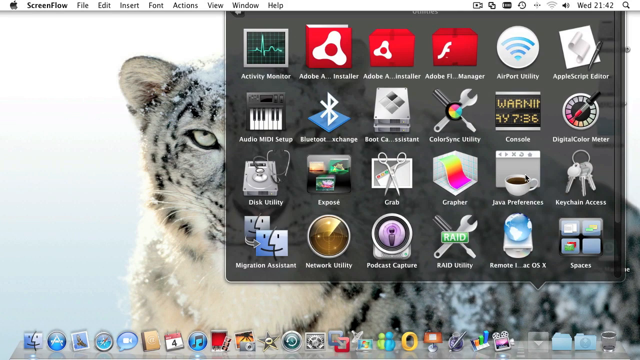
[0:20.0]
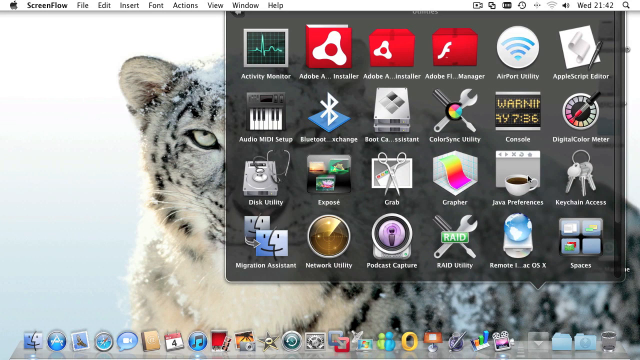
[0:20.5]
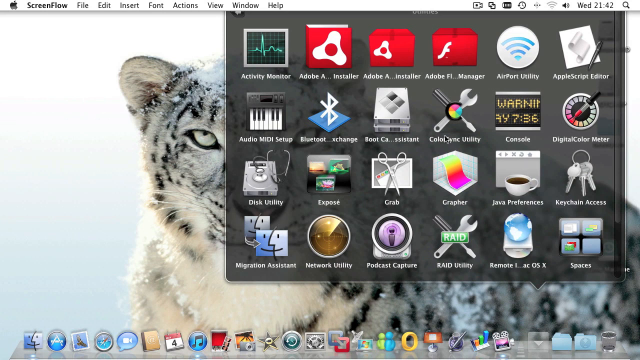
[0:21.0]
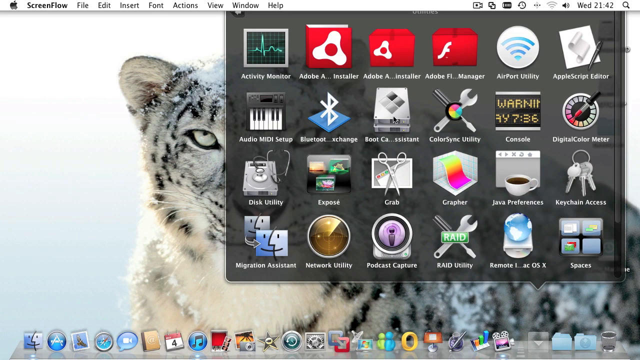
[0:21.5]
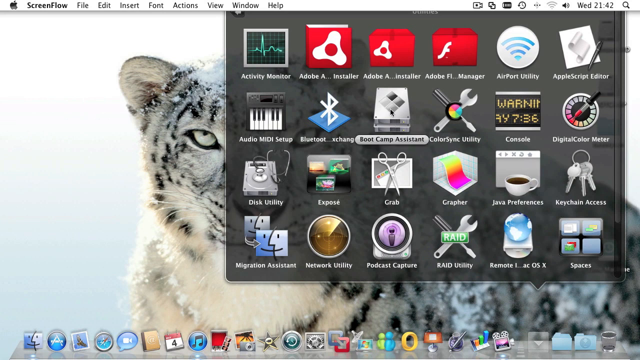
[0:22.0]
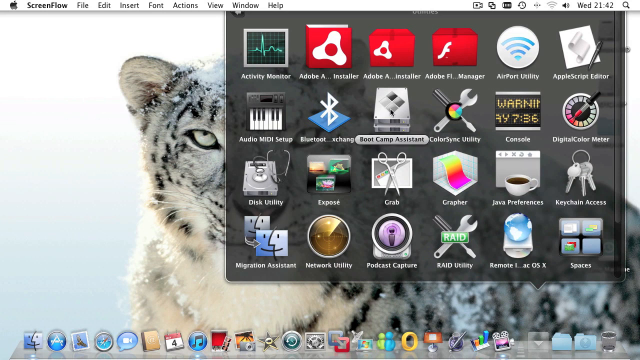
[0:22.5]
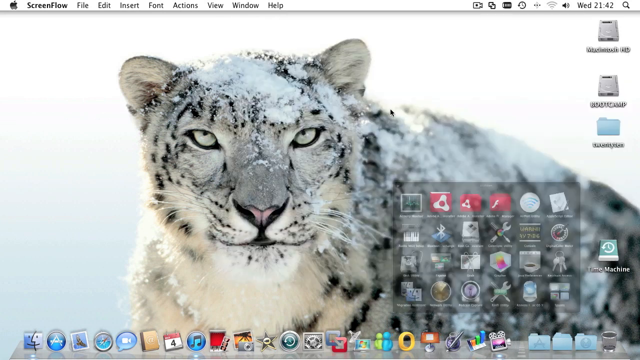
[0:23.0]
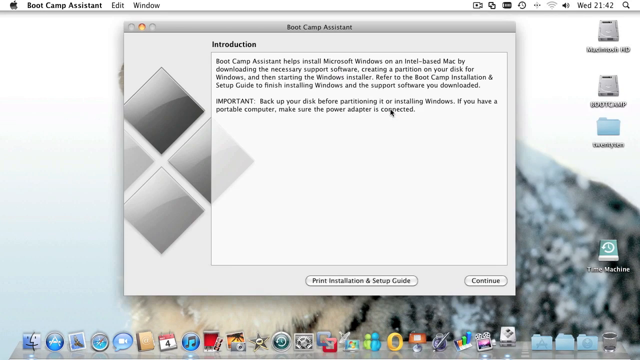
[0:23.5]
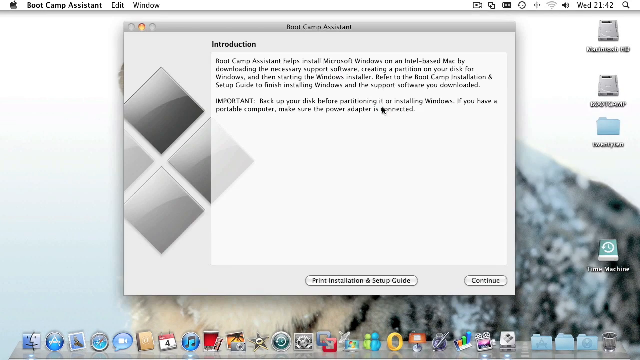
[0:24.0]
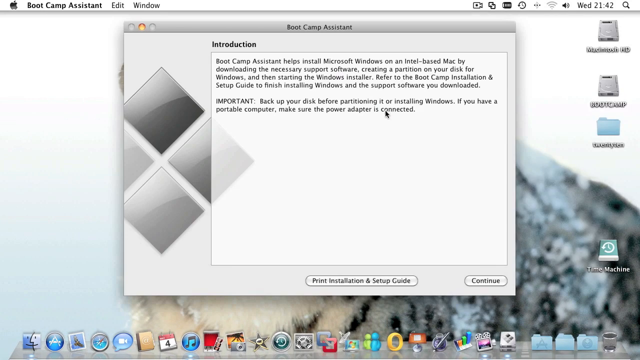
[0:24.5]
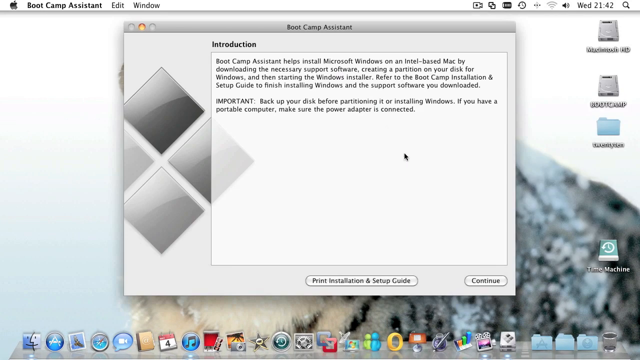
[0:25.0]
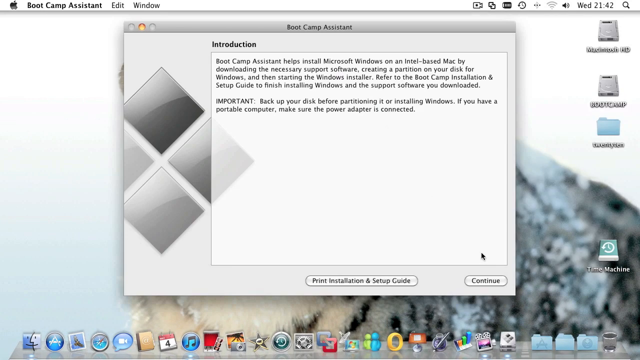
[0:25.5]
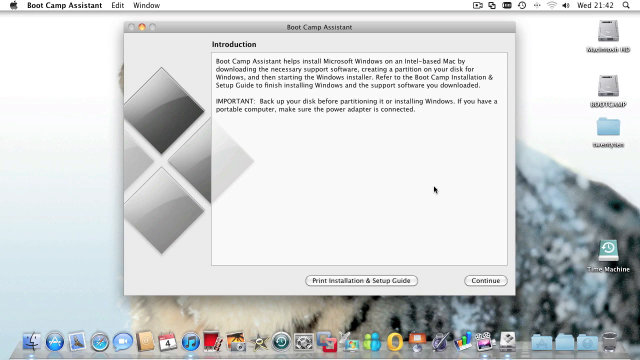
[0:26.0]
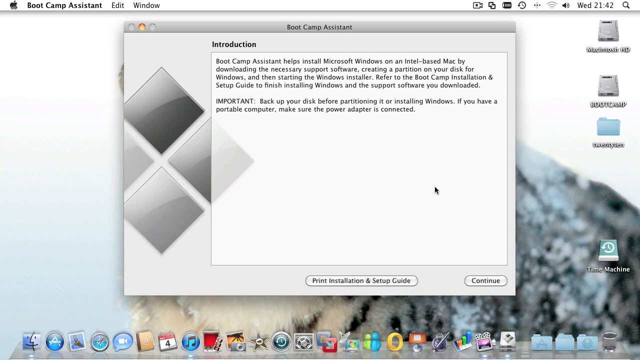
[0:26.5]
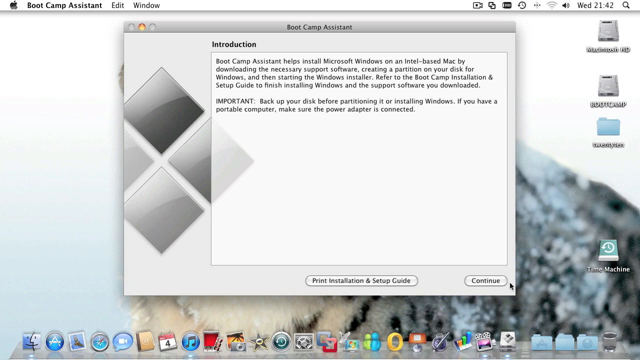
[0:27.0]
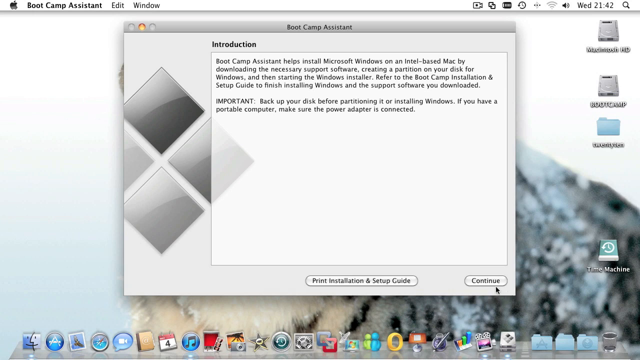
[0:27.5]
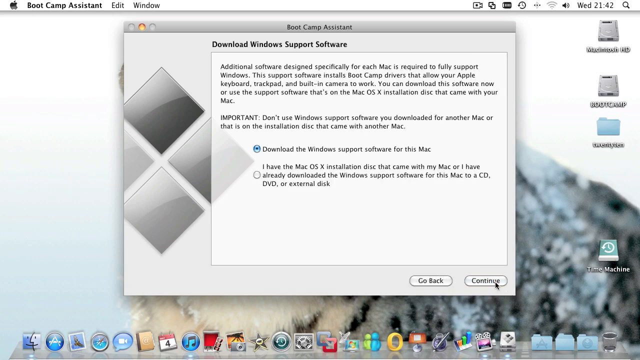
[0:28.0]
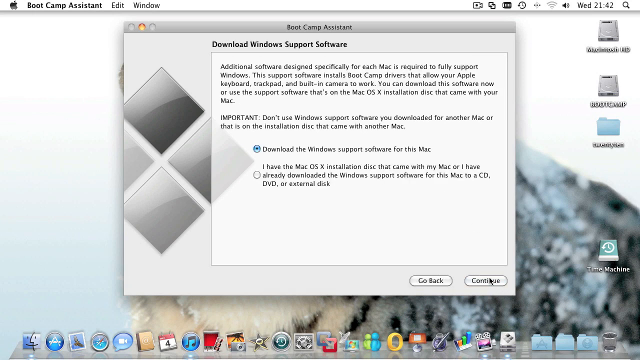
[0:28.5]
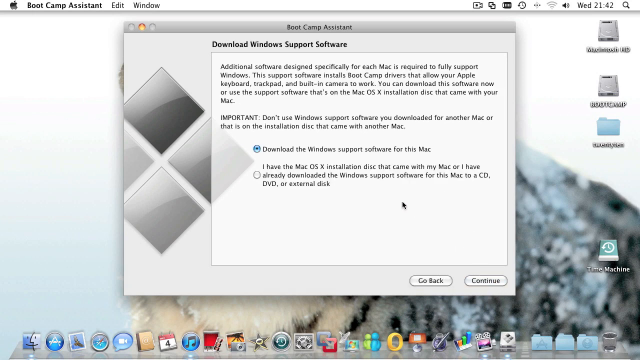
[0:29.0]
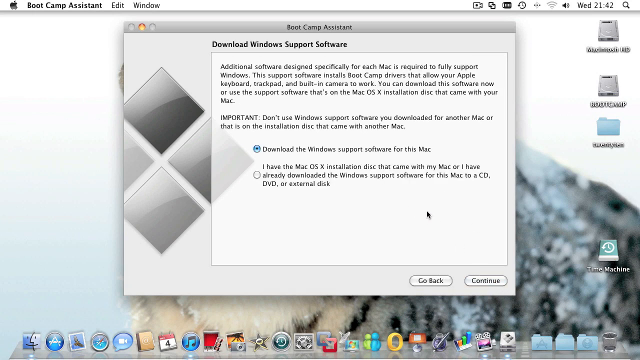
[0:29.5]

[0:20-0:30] A Mac desktop is shown, with a picture of a gray tiger partly hidden behind an open folder, one piercing eye looking at the viewer. Icons along the top of the screen read "flow file edit insert font action view window help," and at the bottom there are various Mac icons, including Safari, iTunes, the trash can, and application folders. The open folder contains many icons, each with its own unique icon, including Activity Monitor, Adobe Installer, Adobe Manager, AirPort Utility, AppleScript Editor, Audio MIDI Setup, Bluetooth, ColorSync, Console, Digital Color Meter, Java Preferences, Keychain Access, Migration Assistant, Network Utility, Podcast Capture, RAID Utility, and Remote. Boot Camp Assistant is then opened. Its Introduction screen reads "Boot Camp Assistant helps install Microsoft Windows on an Intel based Mac," followed by further instructions, and after a space it says "Important: back up your disk before partitioning it or installing Windows." There are two buttons at the bottom. The cursor clicks the Continue button, and the next screen says "Download Windows Support Software," with text stating that additional software designed specifically for each Mac is required to fully support Windows, that the support software installs Boot Camp drivers for the Apple keyboard, trackpad and built-in camera, and that the software can be downloaded now or taken from the Mac OS X installation disk. After a space there is an "Important" note about not using Windows support software downloaded for another Mac or from another Mac's installation disk. Below are two small circular options: the blue one says "Download the Windows support software for this Mac," and the other, not selected, says "I have the Mac OS X installation disk that came with my Mac or I have already downloaded the Windows support software for this Mac to a CD, DVD or external drive." The cursor then clicks out of the window to close it, opens Boot Camp Assistant again to the same information, and clicks out to exit again.